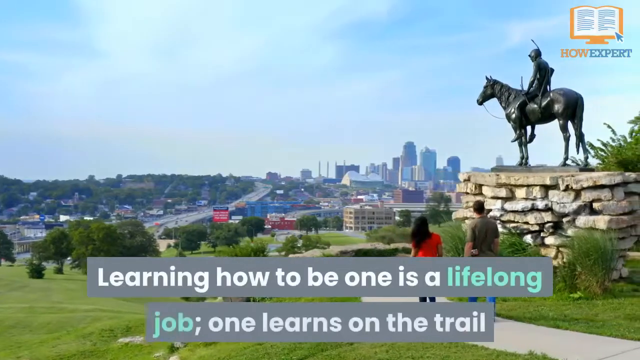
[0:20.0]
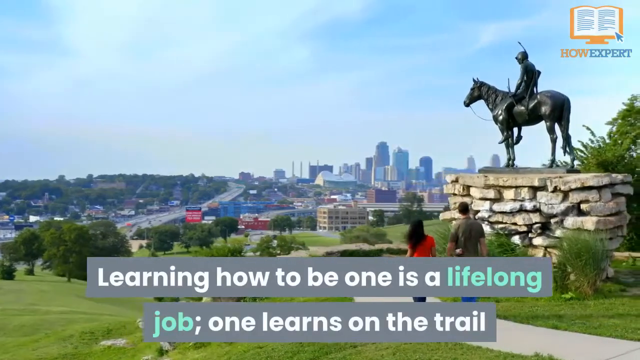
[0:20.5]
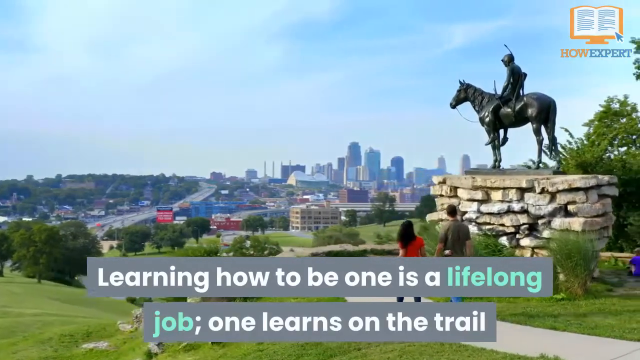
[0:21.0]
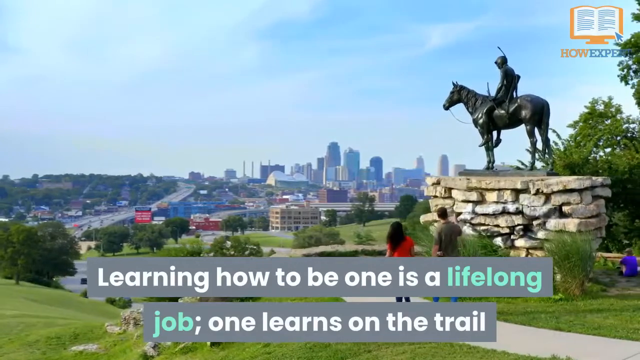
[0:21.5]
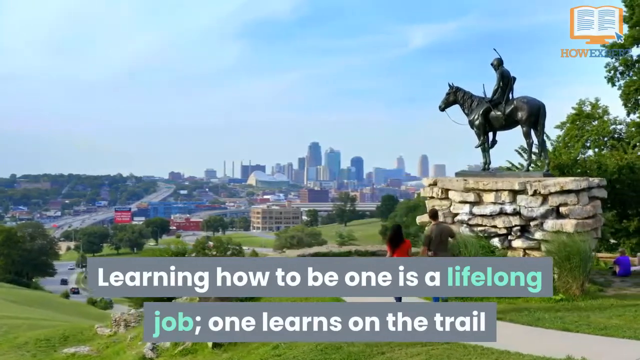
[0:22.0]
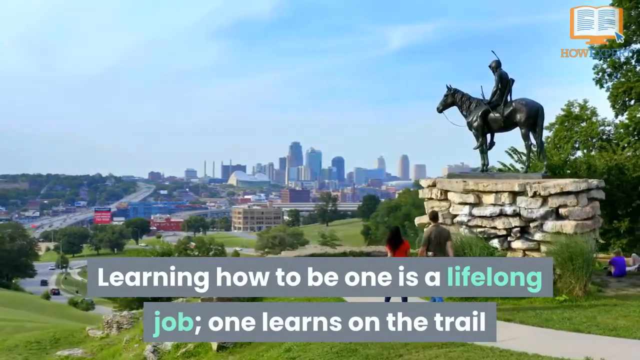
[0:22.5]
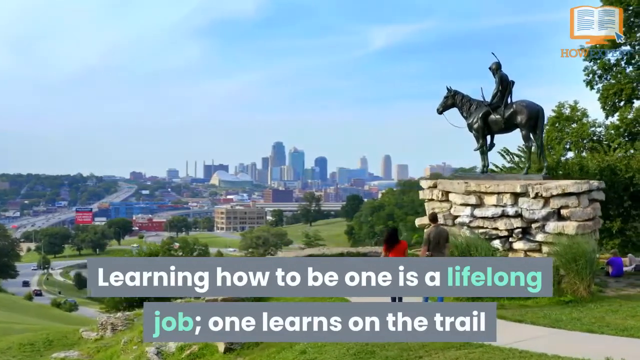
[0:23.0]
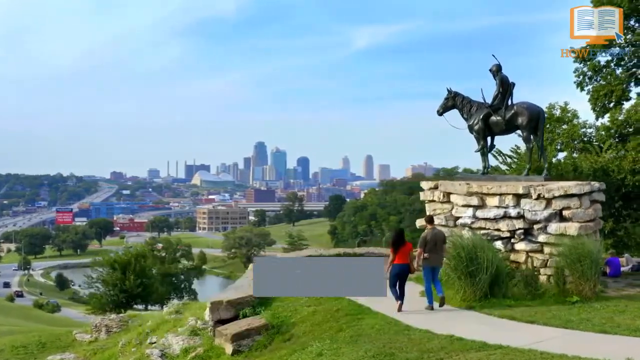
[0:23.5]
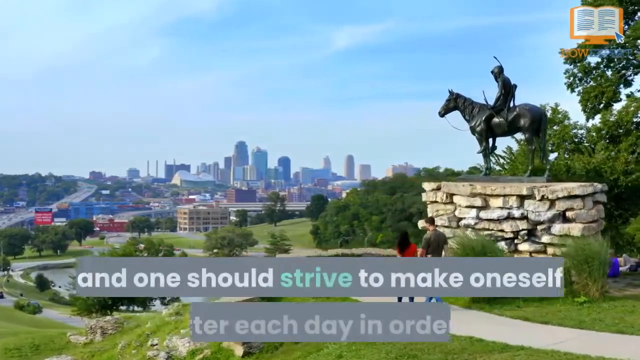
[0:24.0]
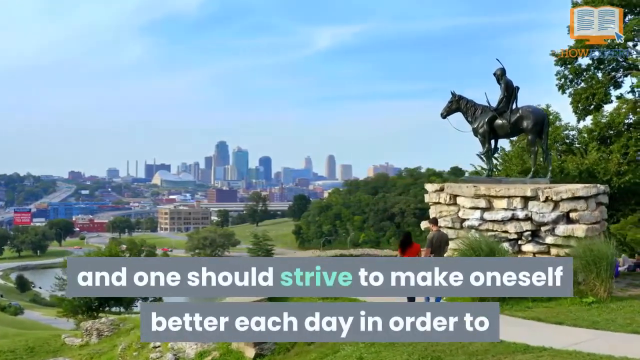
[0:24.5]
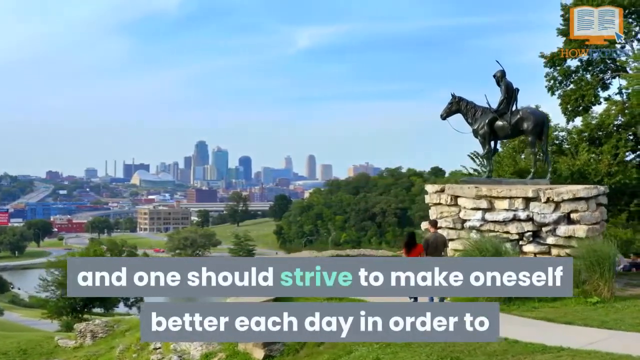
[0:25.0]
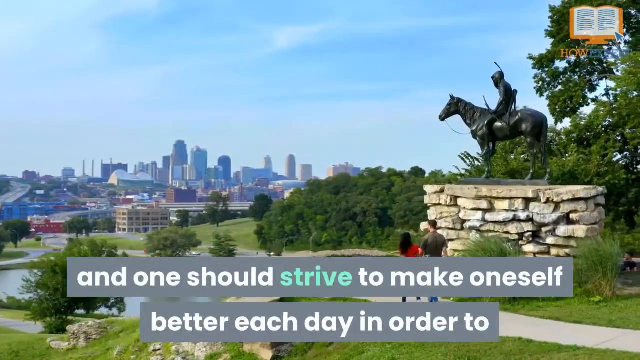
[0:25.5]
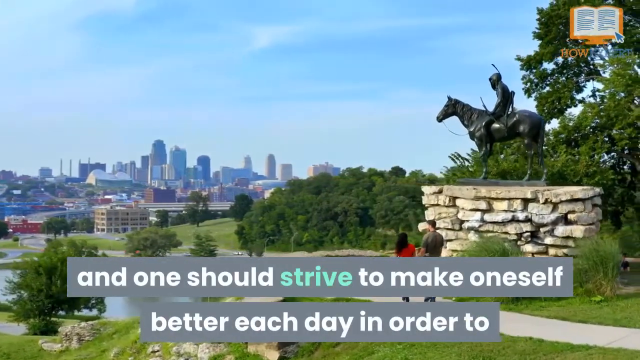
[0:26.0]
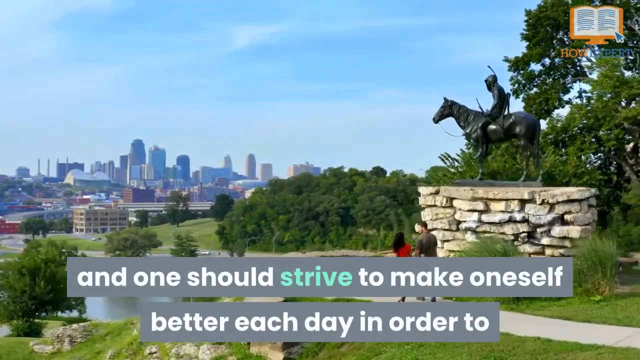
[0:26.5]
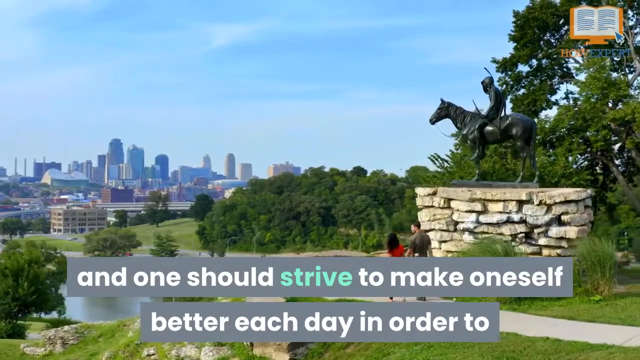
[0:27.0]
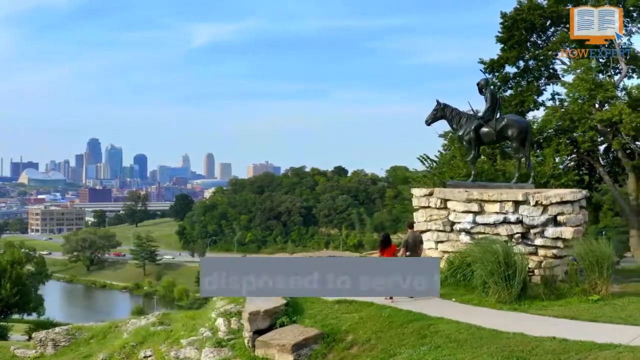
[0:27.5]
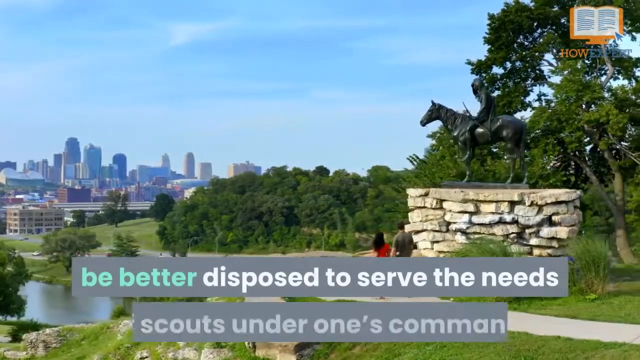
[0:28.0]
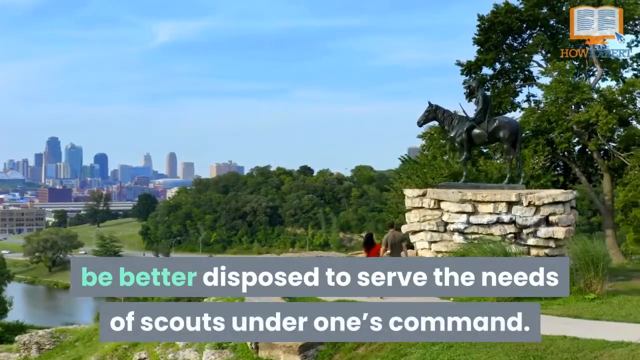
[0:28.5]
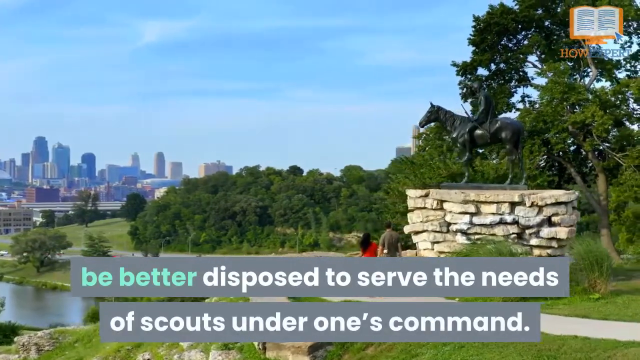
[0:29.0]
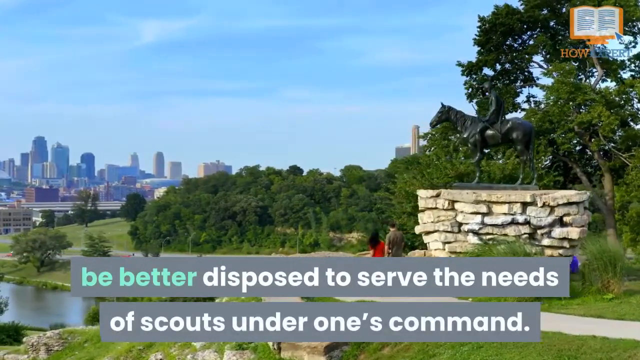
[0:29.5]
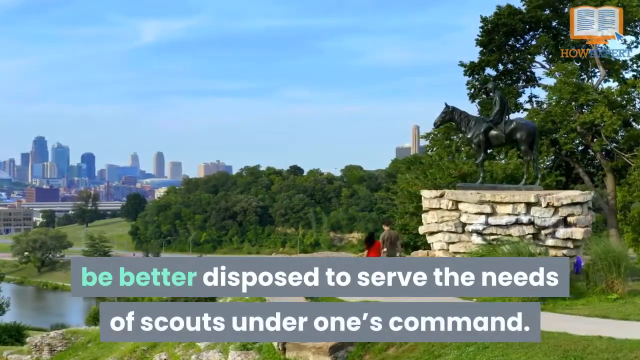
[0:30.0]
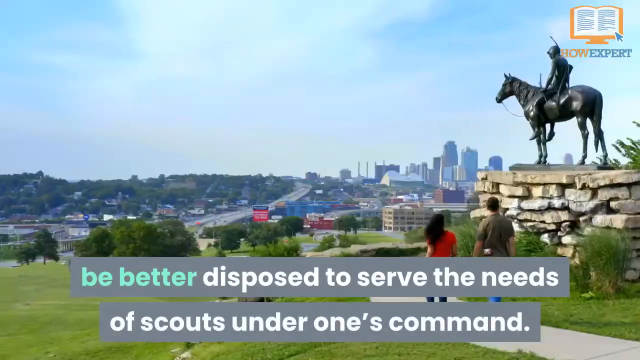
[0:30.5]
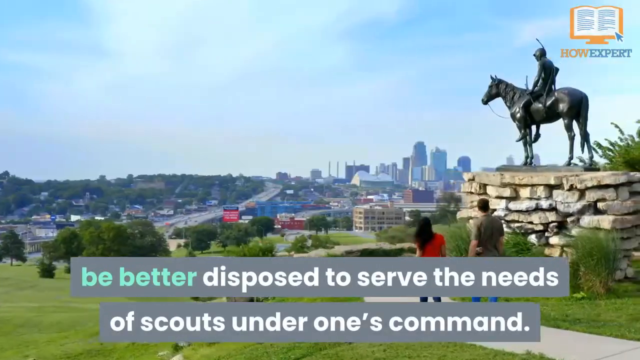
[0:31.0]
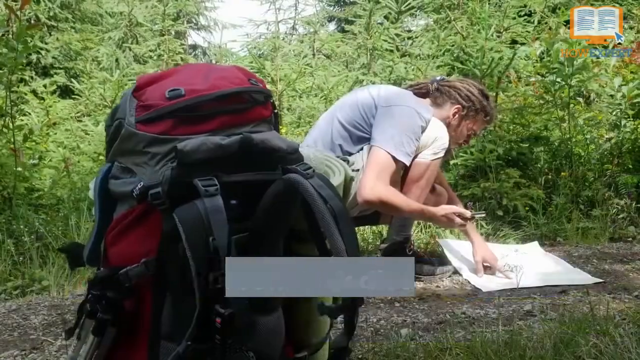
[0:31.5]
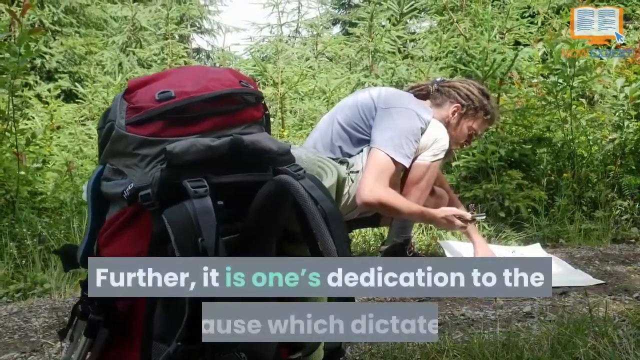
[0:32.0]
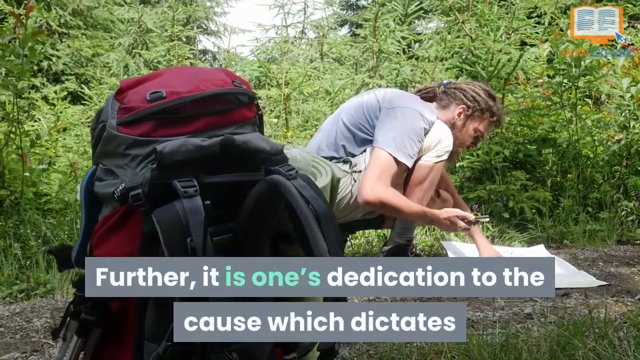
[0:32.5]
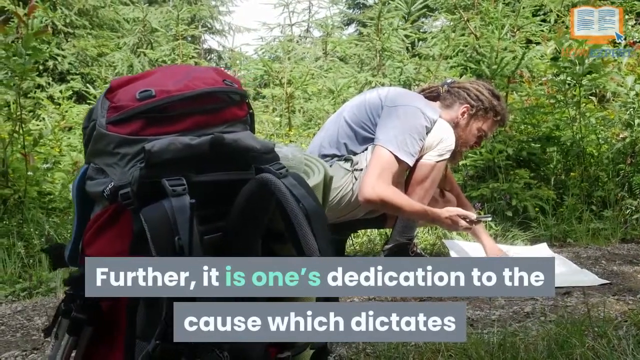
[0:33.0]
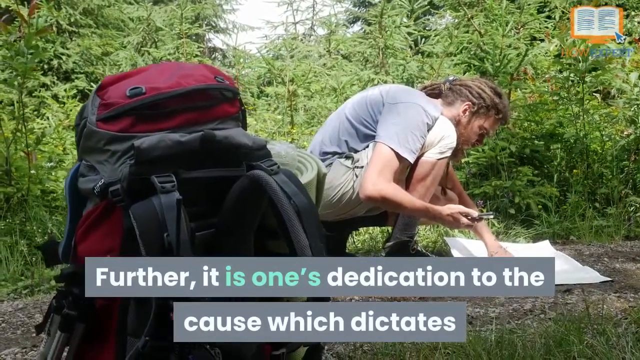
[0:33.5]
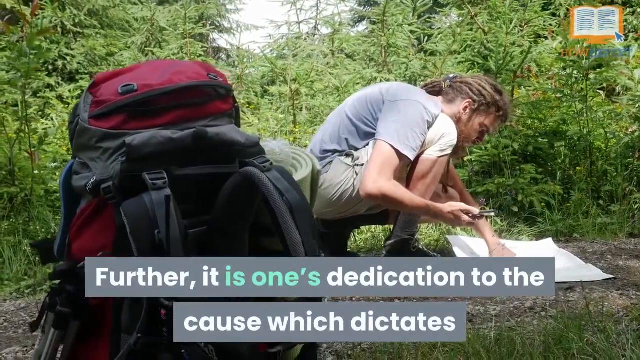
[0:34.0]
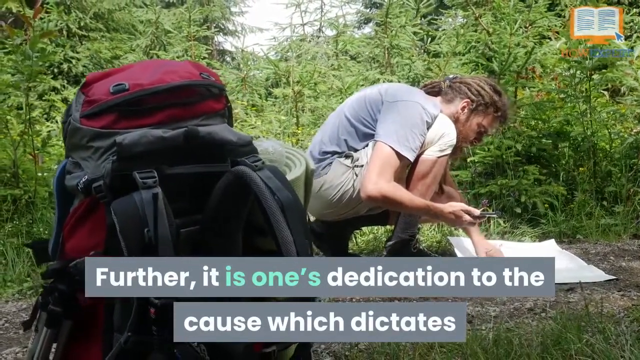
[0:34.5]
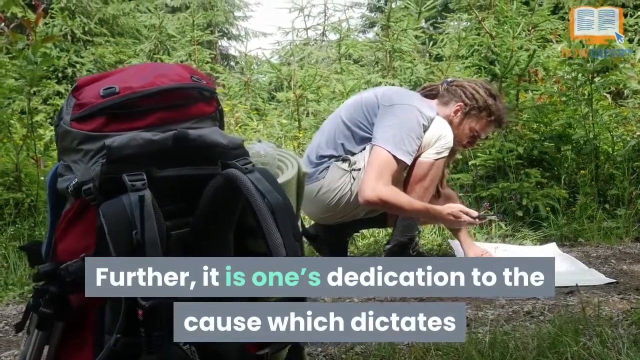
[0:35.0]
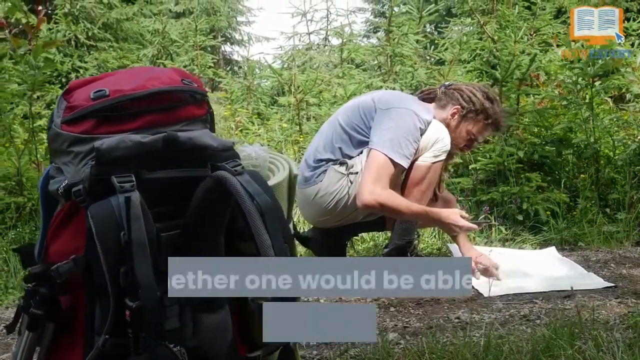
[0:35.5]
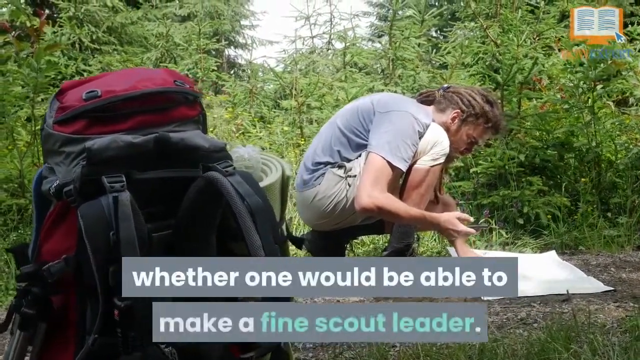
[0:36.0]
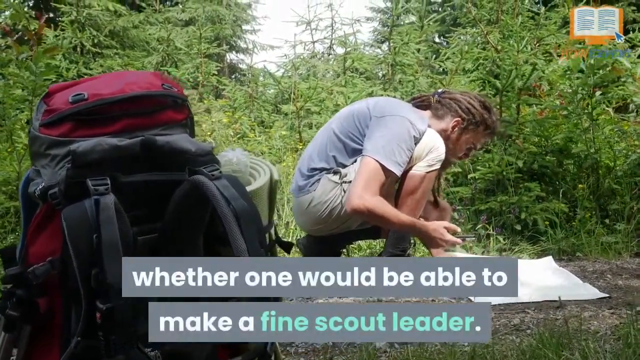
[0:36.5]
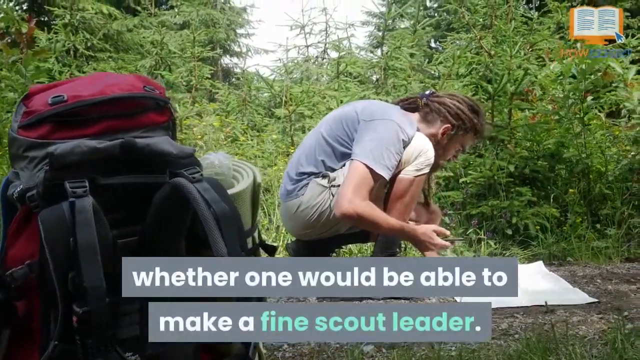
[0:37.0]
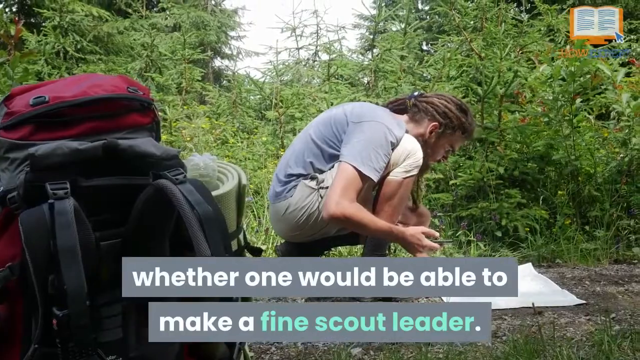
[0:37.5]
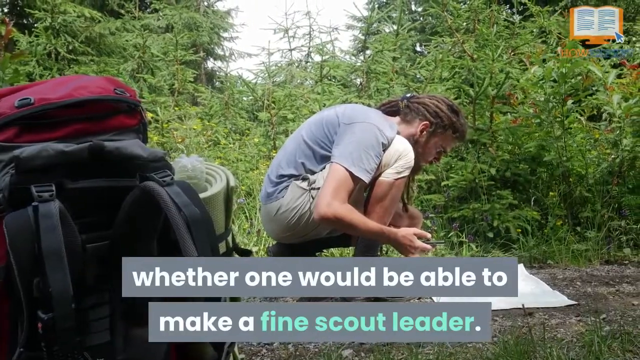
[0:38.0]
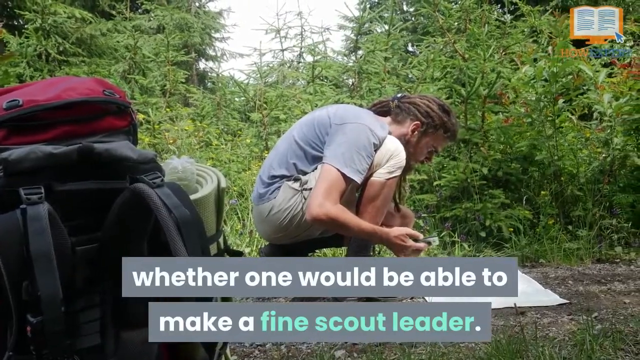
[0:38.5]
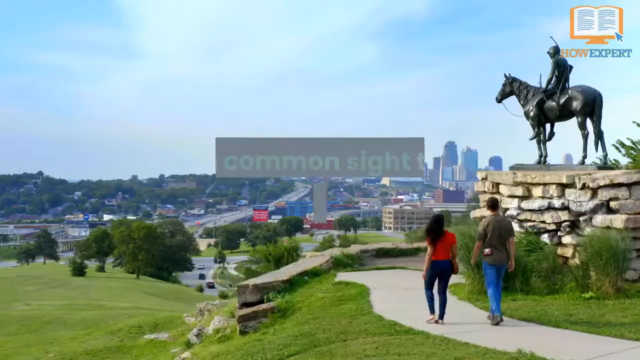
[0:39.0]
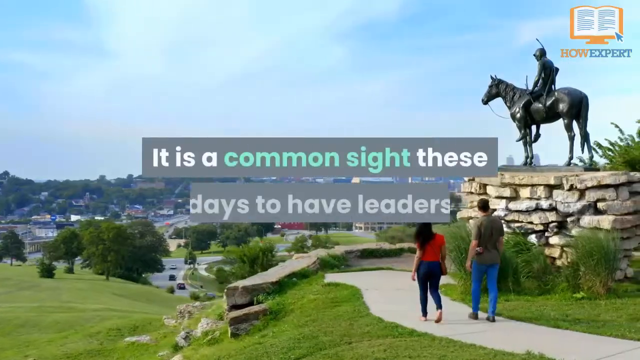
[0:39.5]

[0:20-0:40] A horse on a pile of rocks overlooks a city, with the text "learning how to be one is a lifelong job. One learns on the trail, and should strive to make oneself better each day in order to be better disposed." Next, someone out on a trail with a backpack is bent down, looking like they are trying to read a map. Text reads "further, it is one's dedication to the cause," followed by "it is common sight these days to have leaders," and the video cuts back to the shot overlooking the hill. The video flips back and forth between elements quite rapidly. The little book icon in the top right shows words written on a page, with gold bordering around it and some sort of stand; under it, the word "how" is in gold and the word "expert" is in a sort of bluish purple tone.